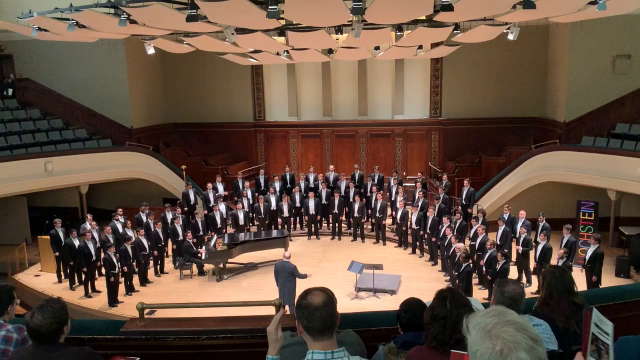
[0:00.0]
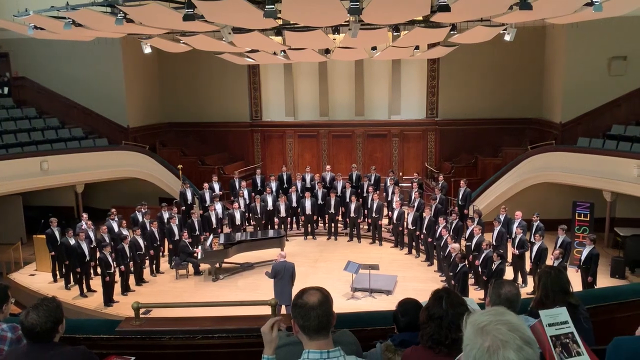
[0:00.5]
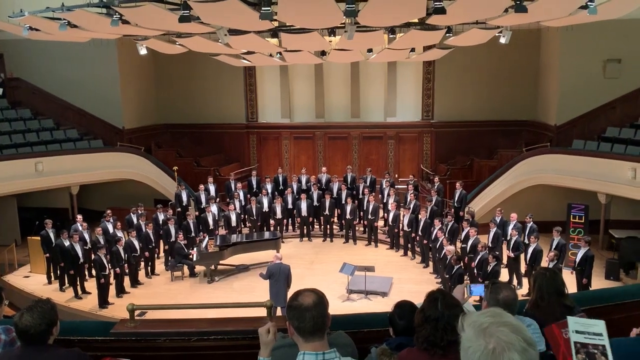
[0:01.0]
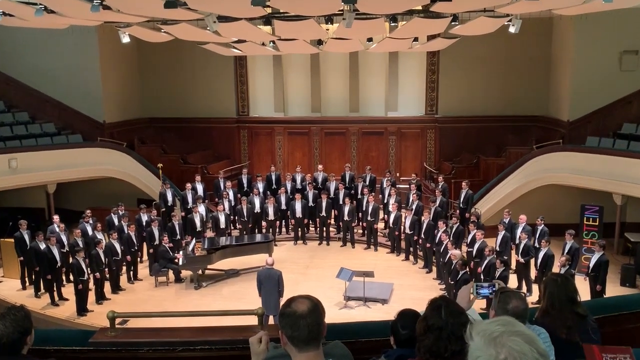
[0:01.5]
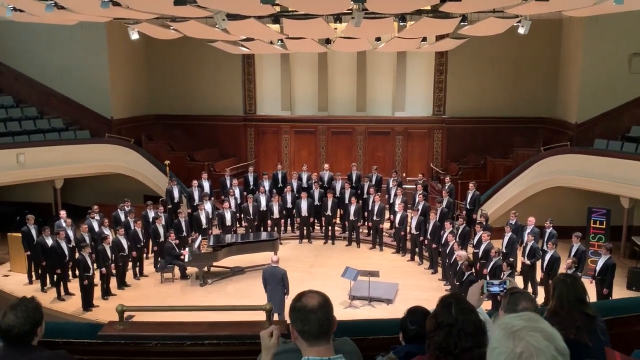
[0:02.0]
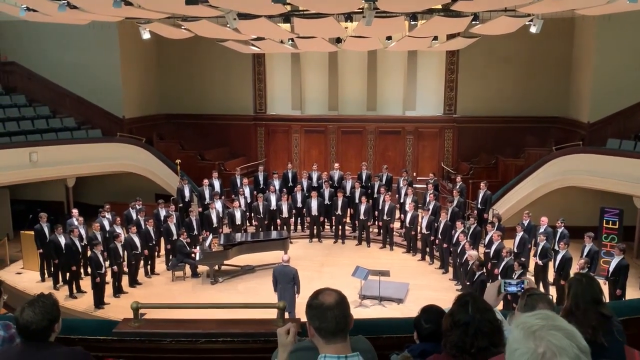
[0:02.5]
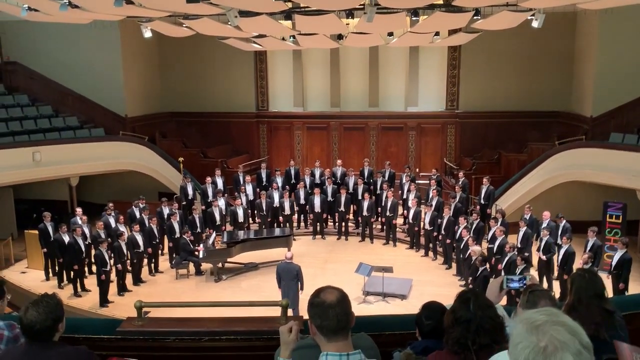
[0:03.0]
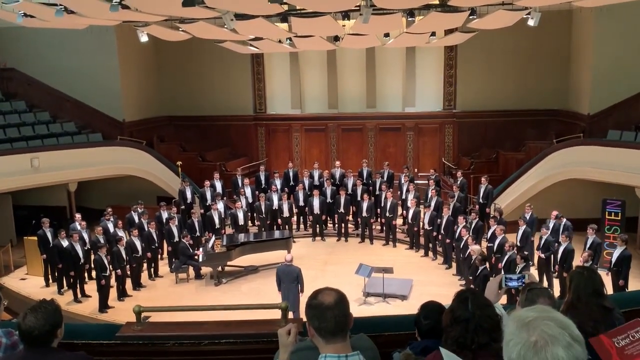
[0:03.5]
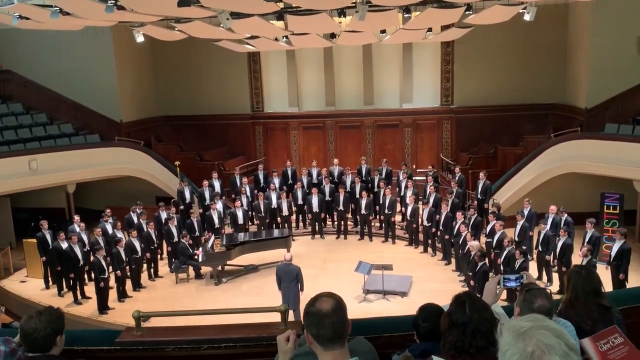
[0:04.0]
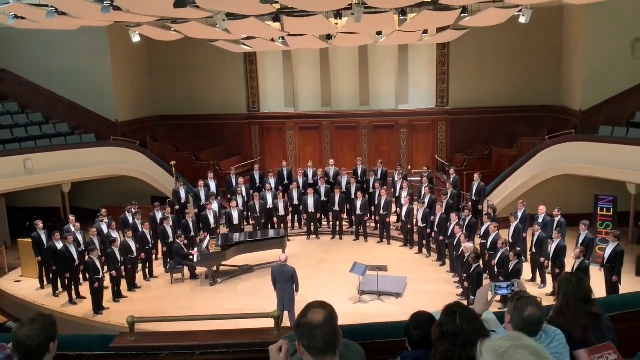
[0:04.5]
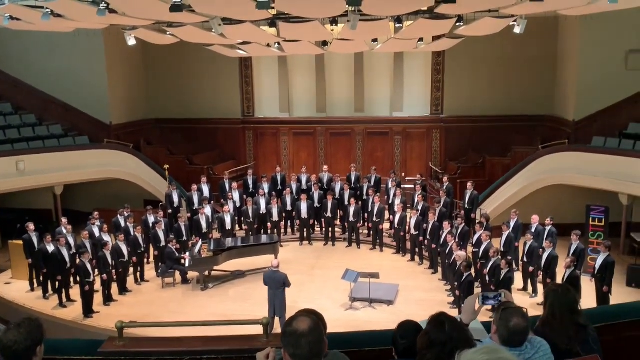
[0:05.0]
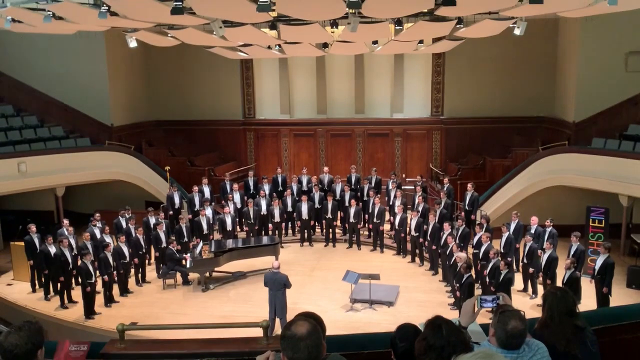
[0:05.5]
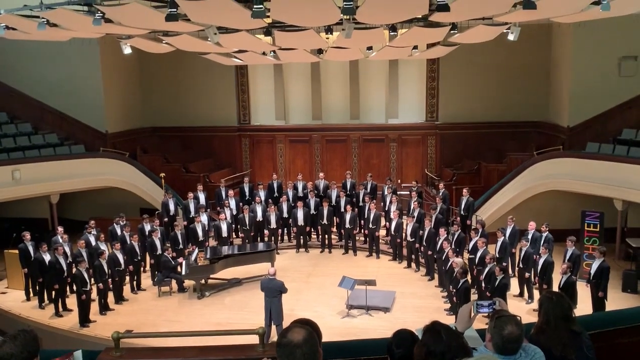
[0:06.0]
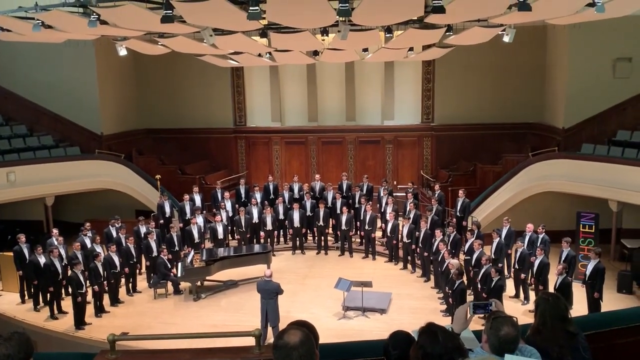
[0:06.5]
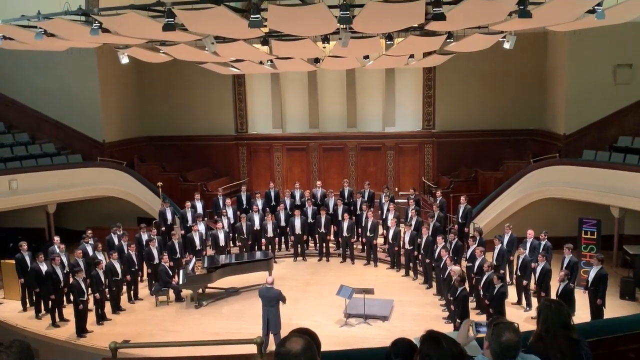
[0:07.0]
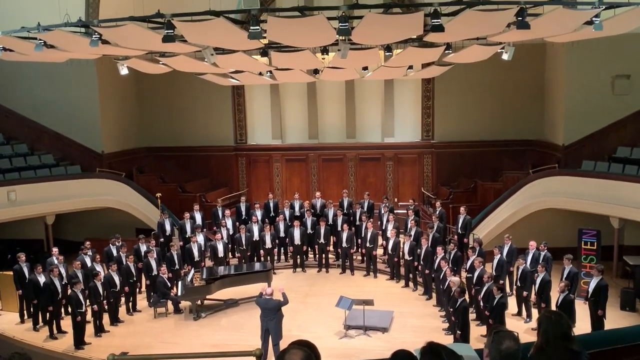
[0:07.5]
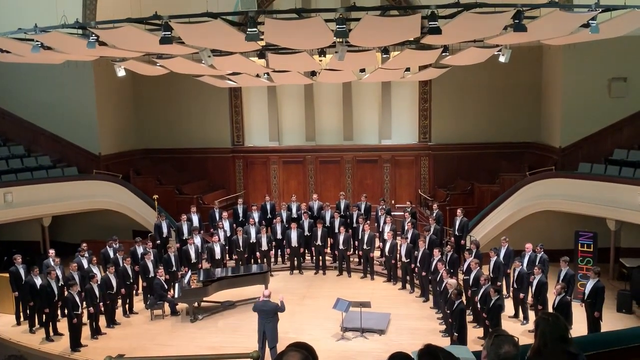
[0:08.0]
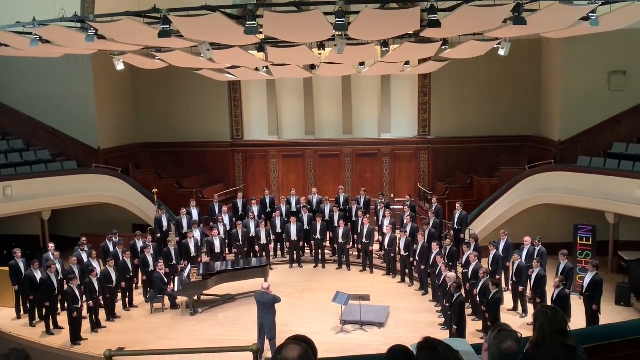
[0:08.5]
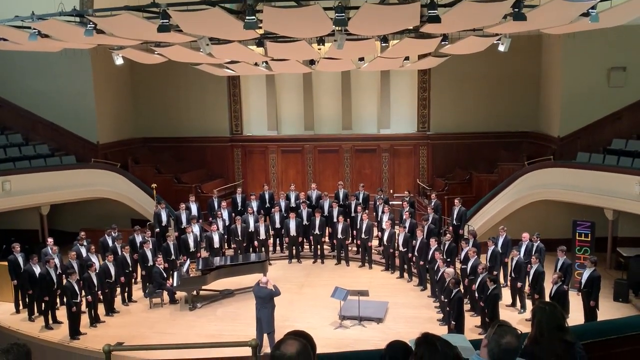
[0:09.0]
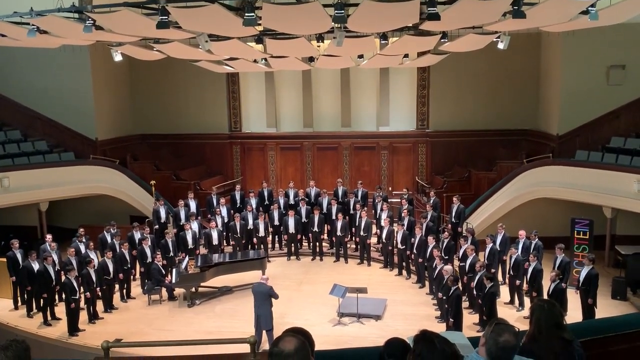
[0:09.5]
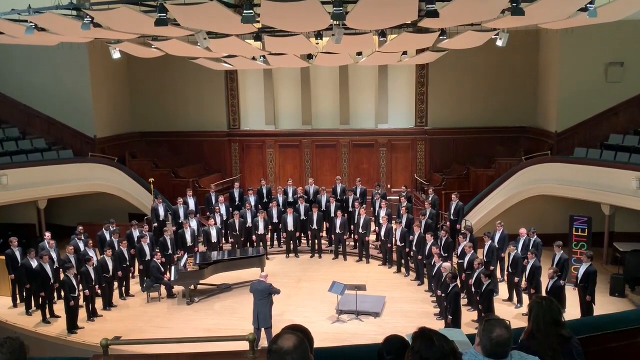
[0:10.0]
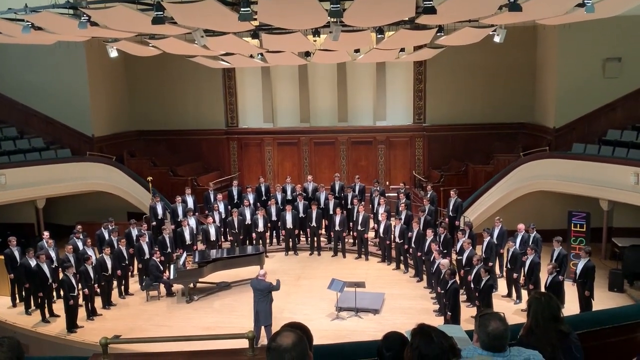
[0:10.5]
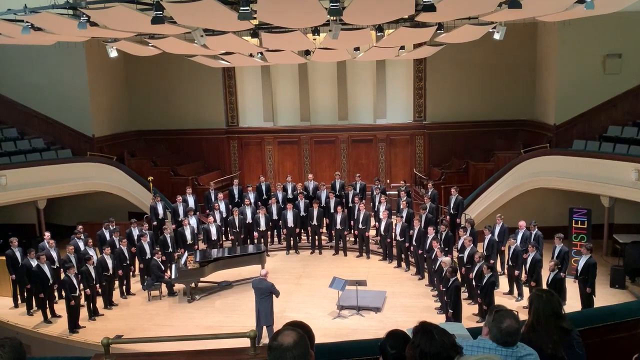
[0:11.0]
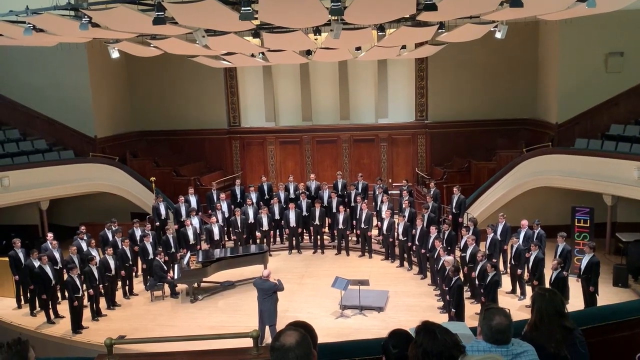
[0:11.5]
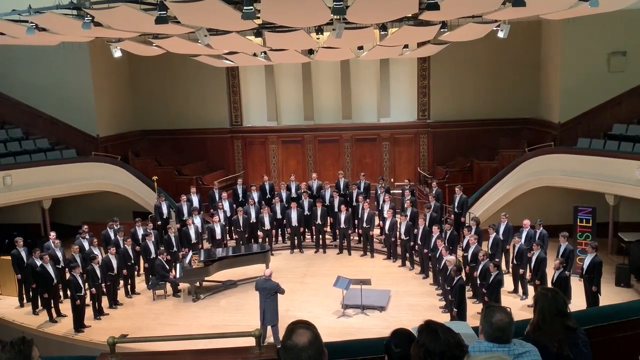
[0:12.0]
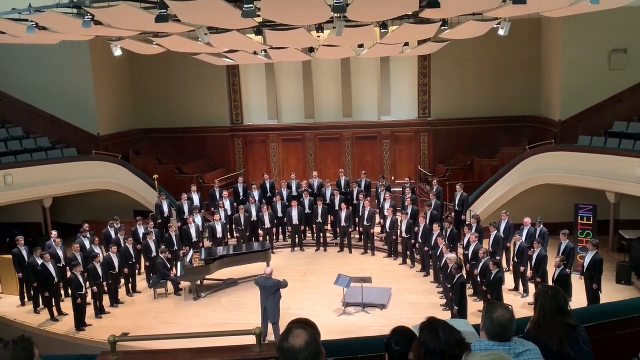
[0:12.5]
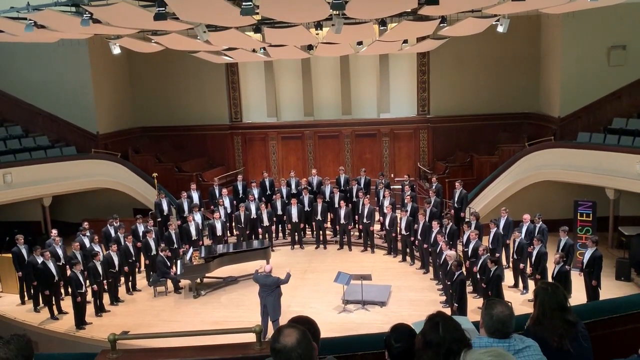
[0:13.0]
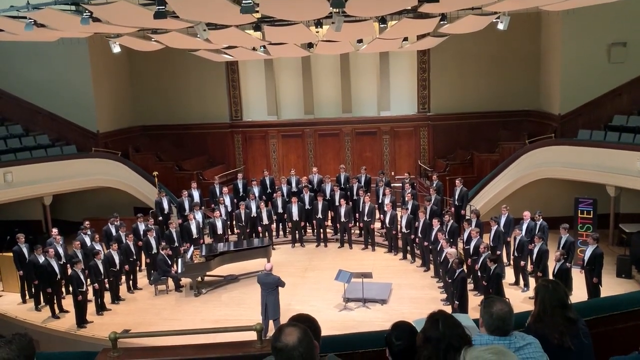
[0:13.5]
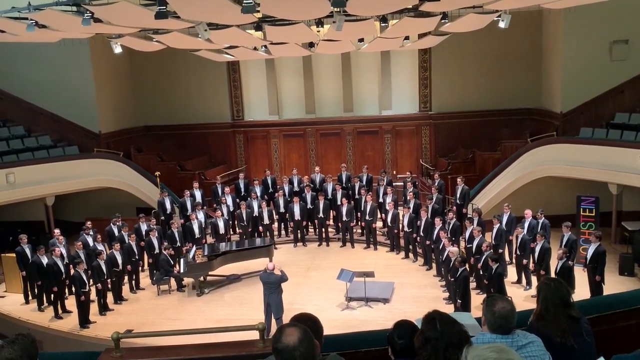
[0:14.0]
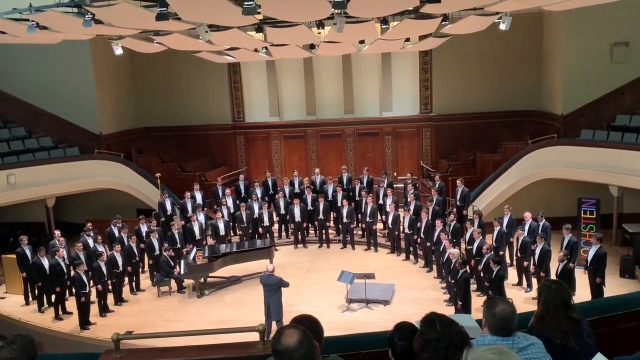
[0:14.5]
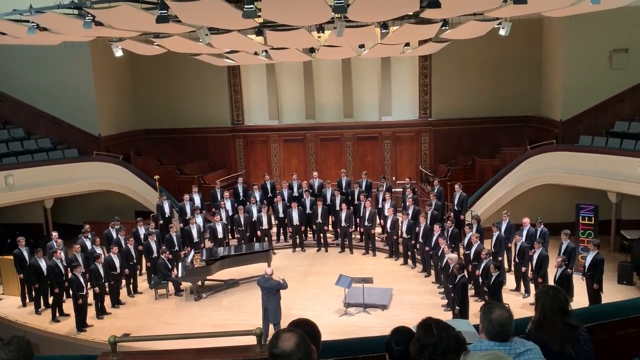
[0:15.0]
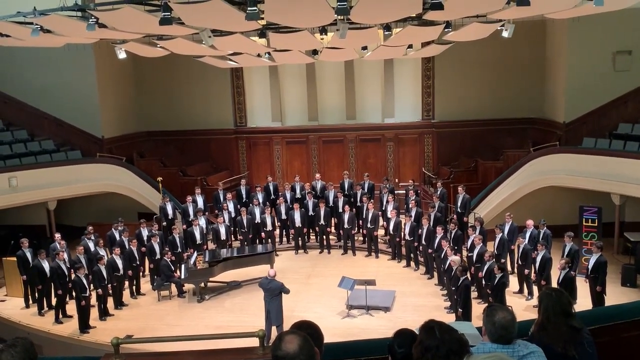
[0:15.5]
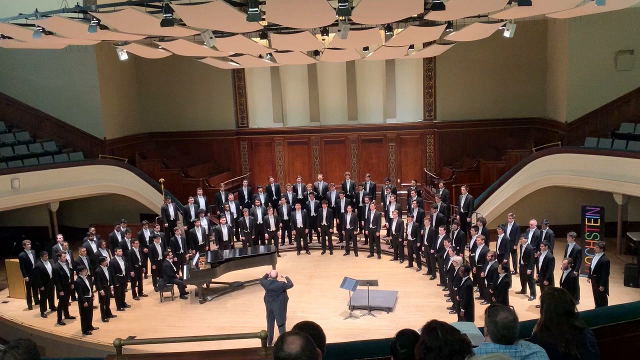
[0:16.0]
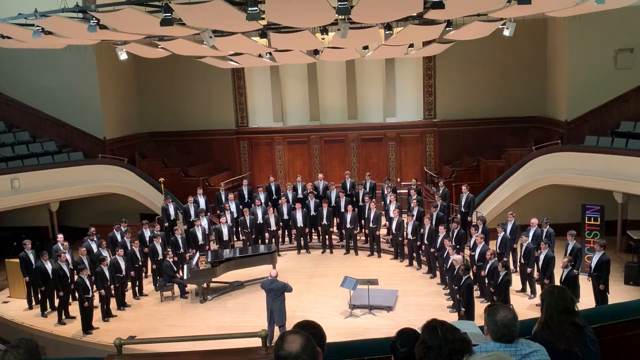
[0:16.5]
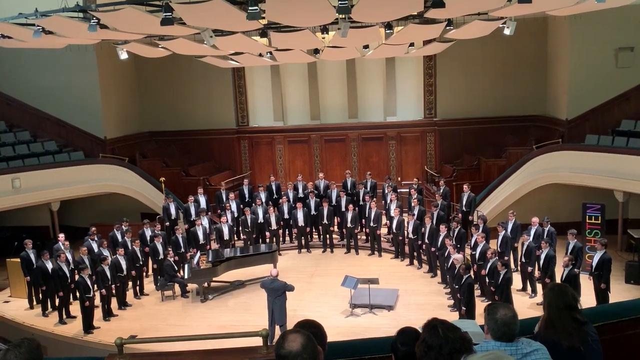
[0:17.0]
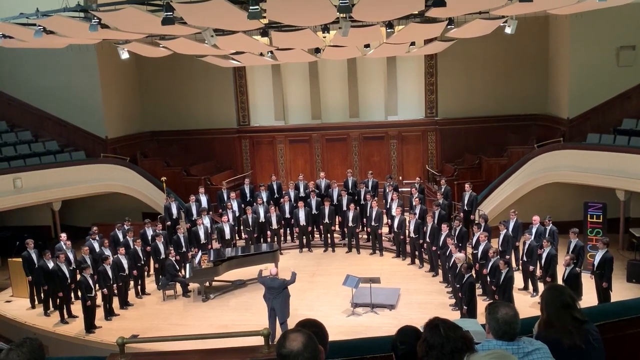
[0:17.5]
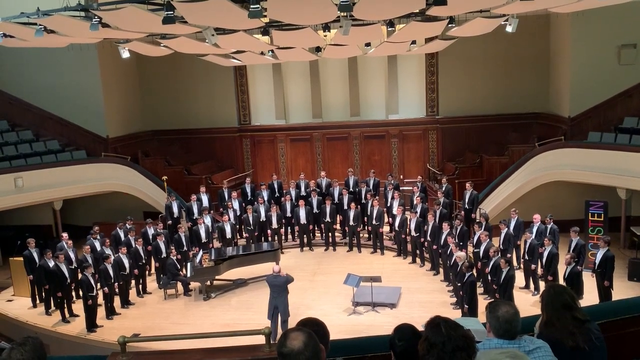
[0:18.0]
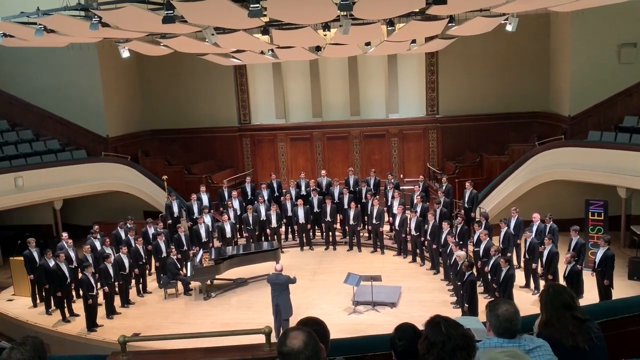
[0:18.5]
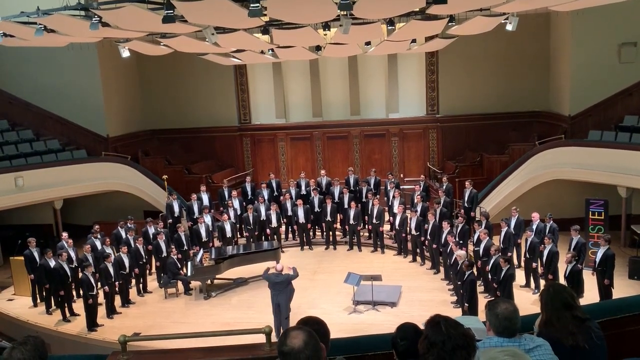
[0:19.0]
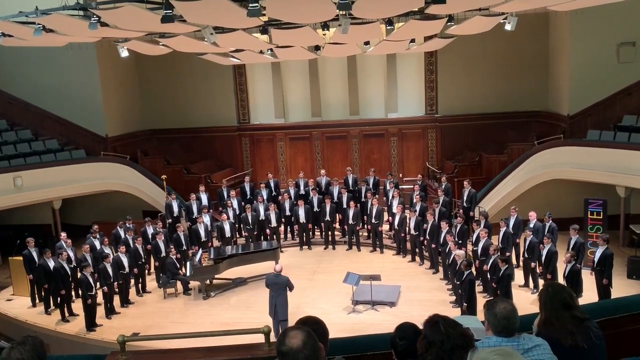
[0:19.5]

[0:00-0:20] What looks like a choir of male singers stands in three semicircles in a theater. The interior semicircle stands on the floor, the row behind them is on a higher tier so they are visible, and the row behind that is on an even higher tier so they can be seen as well. Lights are visible above them, and upper tiers of seats are on both the left and right of where the men stand. At the bottom of the screen is the audience, the backs of people's heads visible as they look straight at the choir in front of them. The men wear black or dark-colored pants, black jackets and white dress shirts, and they do not appear to be wearing ties. A baby grand piano is on the left side of the stage, with a piano player sitting at it, his hands on the keyboard. A conductor who is bald on top of his head is in the center of the stage, with music stands off to his right, and he conducts the choir. His hands move very slowly at first and then pick up movement, as if the tempo of the music has gotten faster.